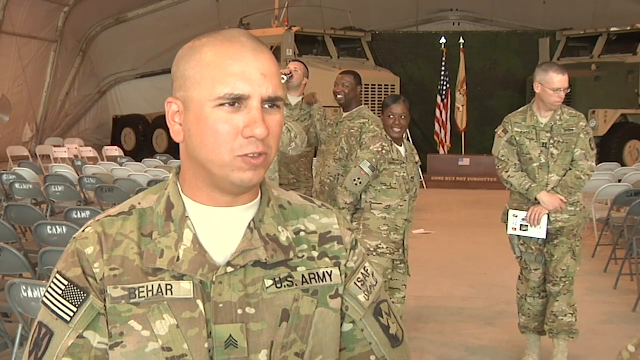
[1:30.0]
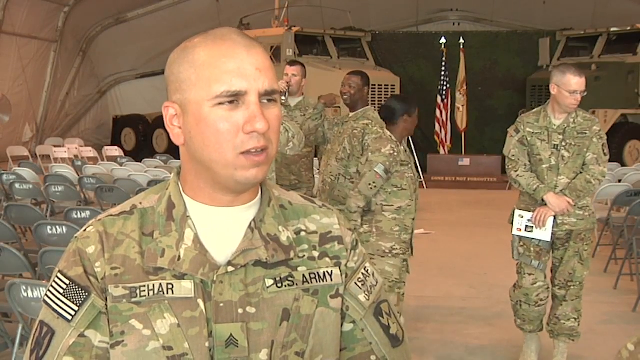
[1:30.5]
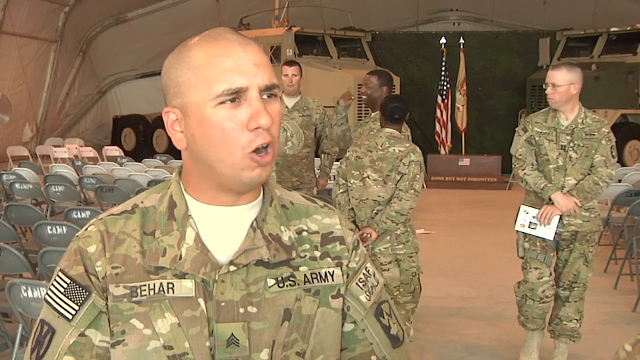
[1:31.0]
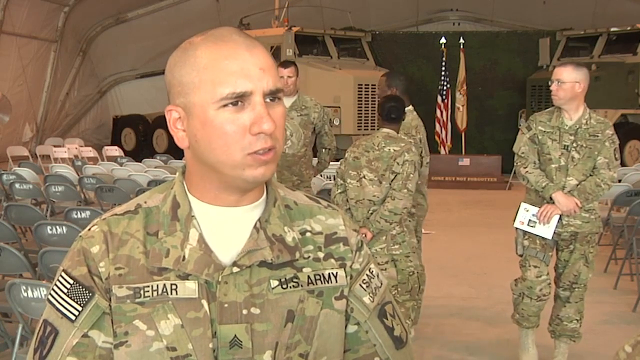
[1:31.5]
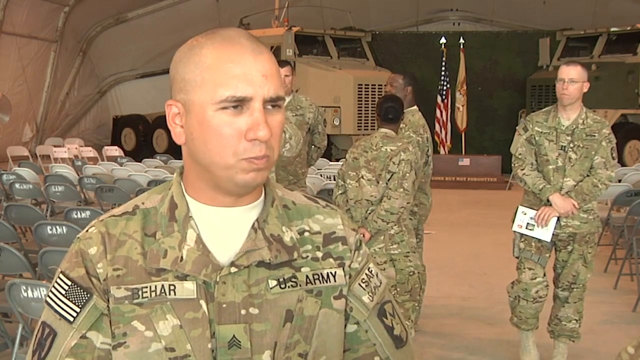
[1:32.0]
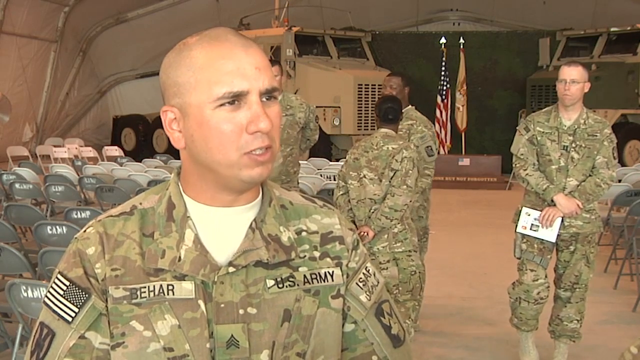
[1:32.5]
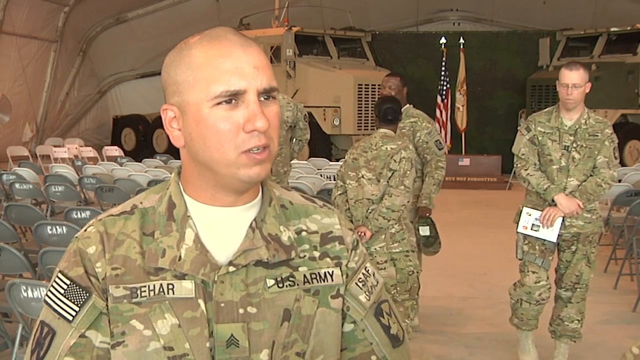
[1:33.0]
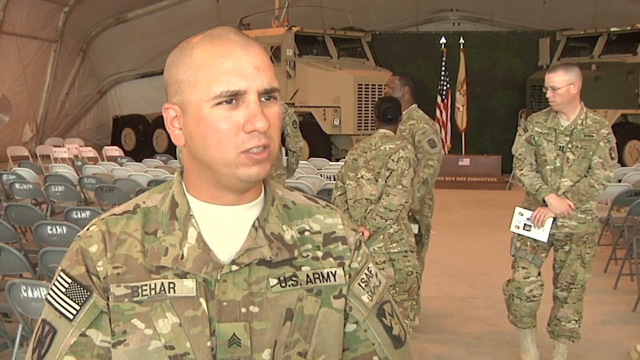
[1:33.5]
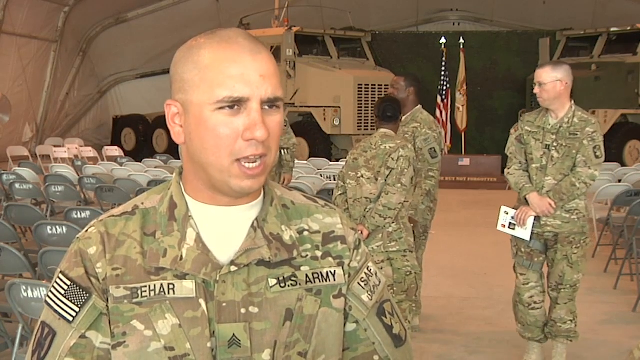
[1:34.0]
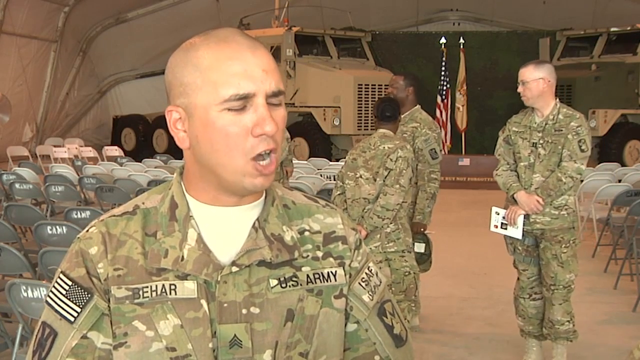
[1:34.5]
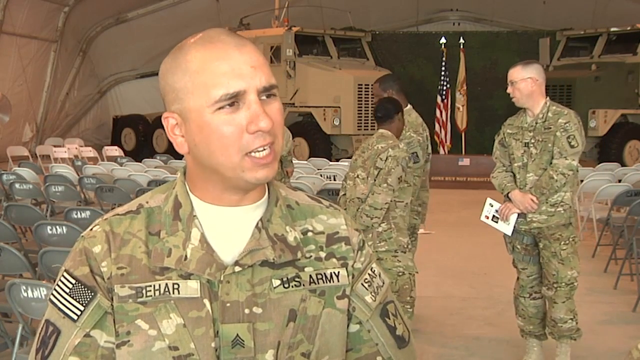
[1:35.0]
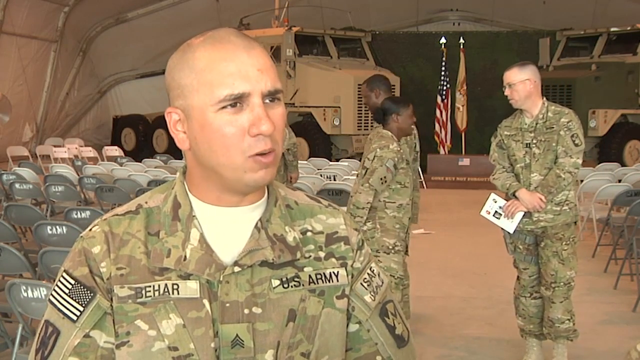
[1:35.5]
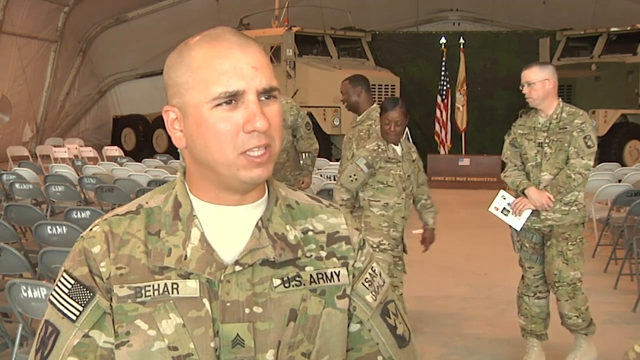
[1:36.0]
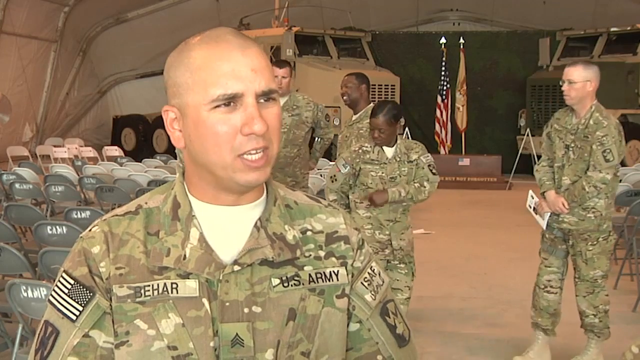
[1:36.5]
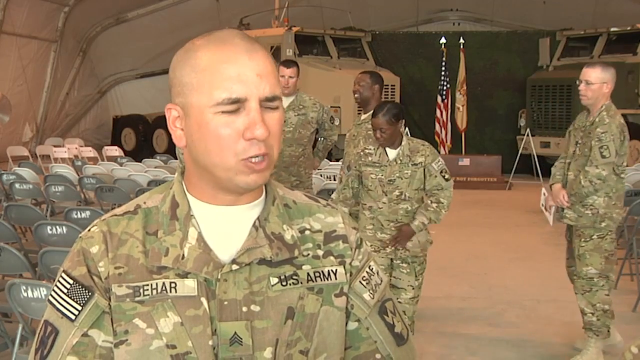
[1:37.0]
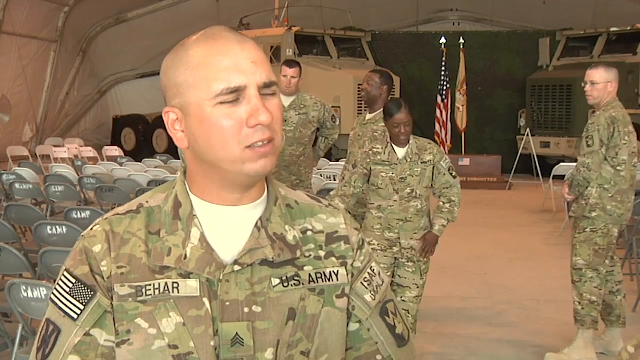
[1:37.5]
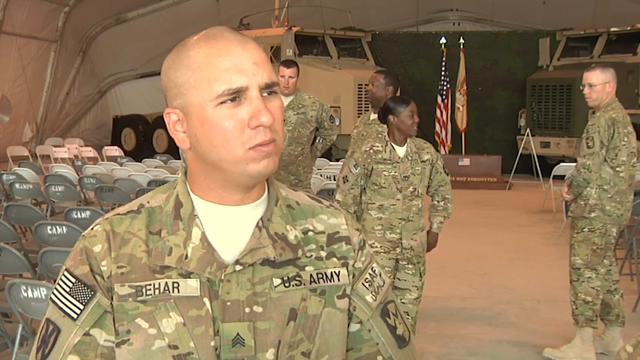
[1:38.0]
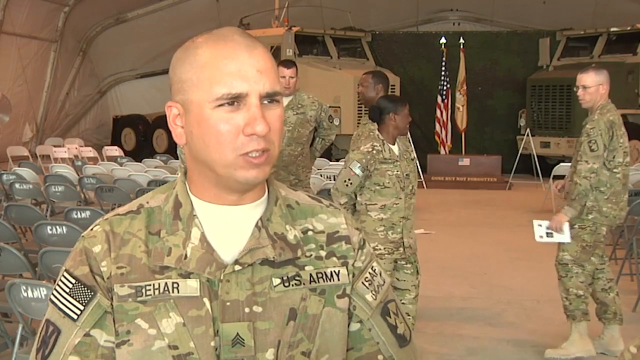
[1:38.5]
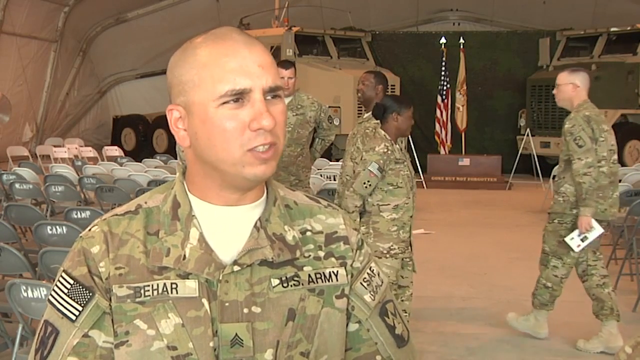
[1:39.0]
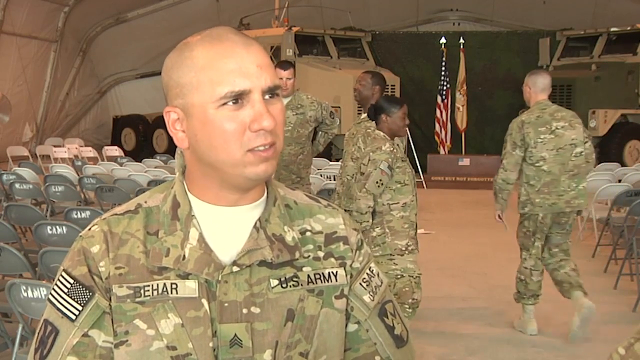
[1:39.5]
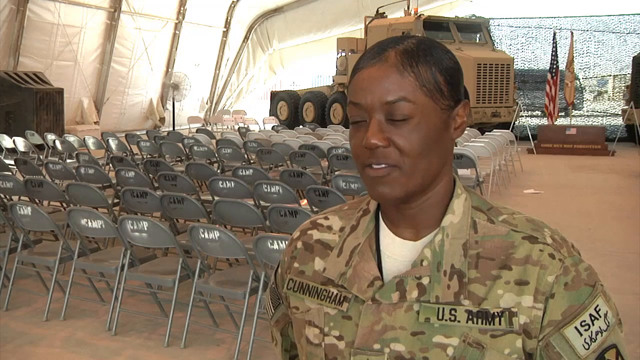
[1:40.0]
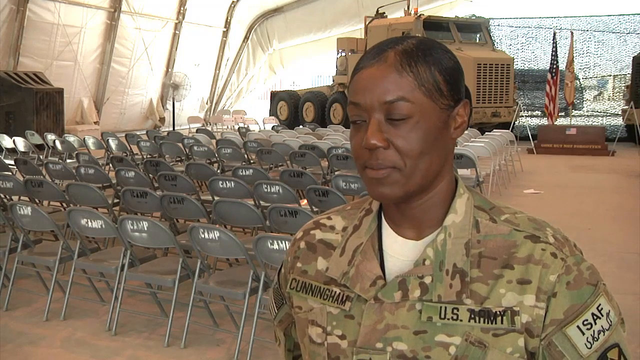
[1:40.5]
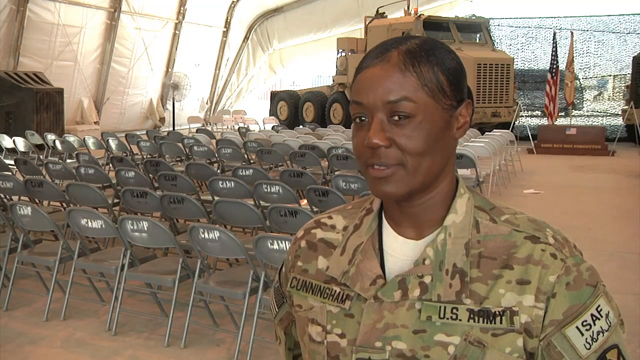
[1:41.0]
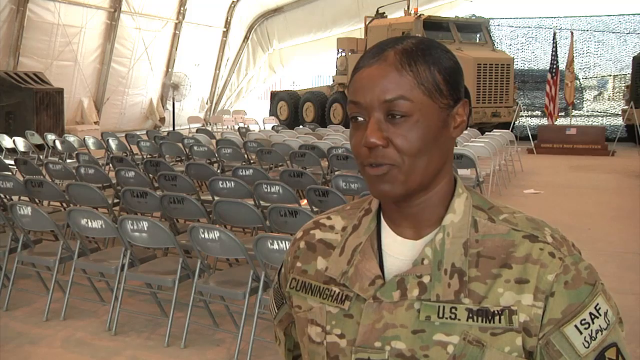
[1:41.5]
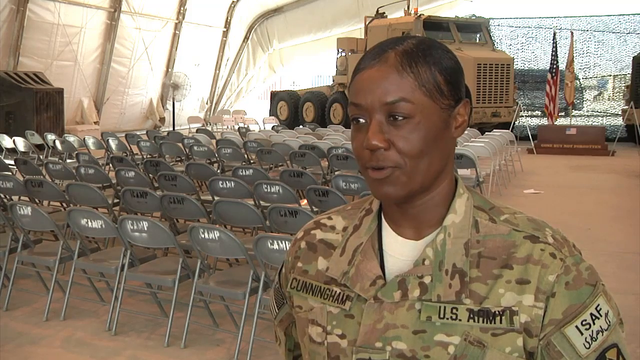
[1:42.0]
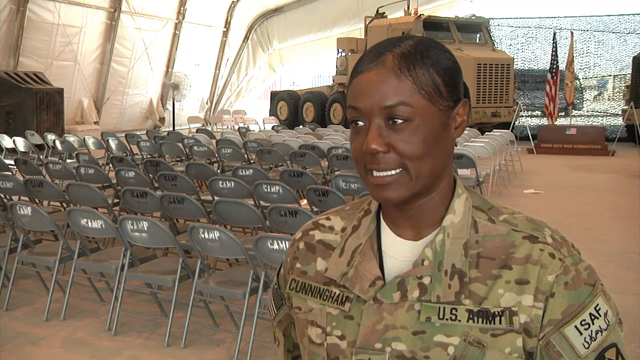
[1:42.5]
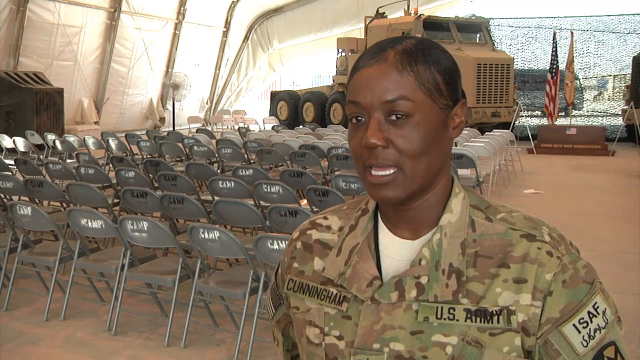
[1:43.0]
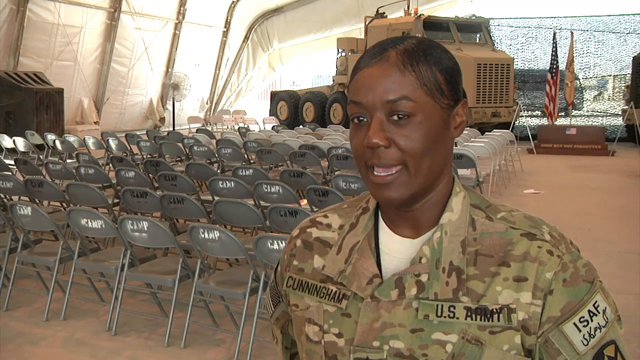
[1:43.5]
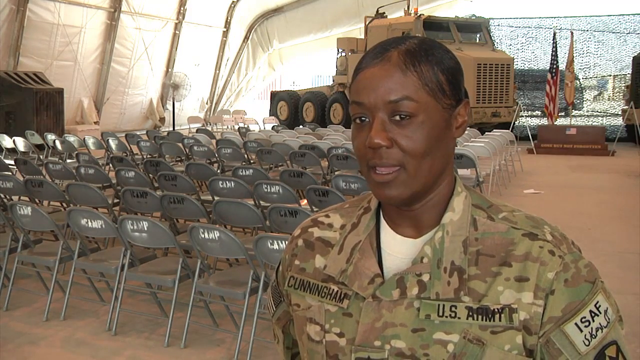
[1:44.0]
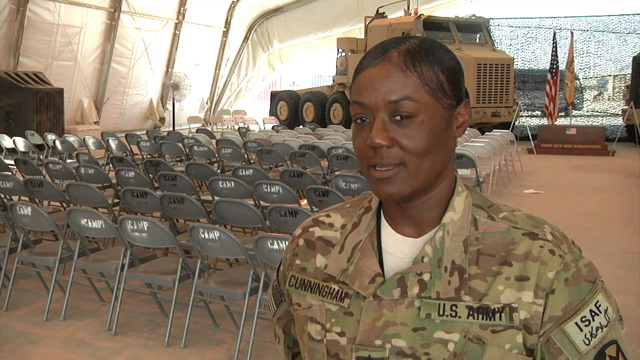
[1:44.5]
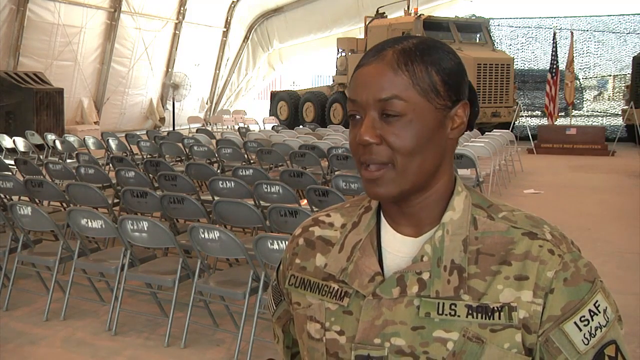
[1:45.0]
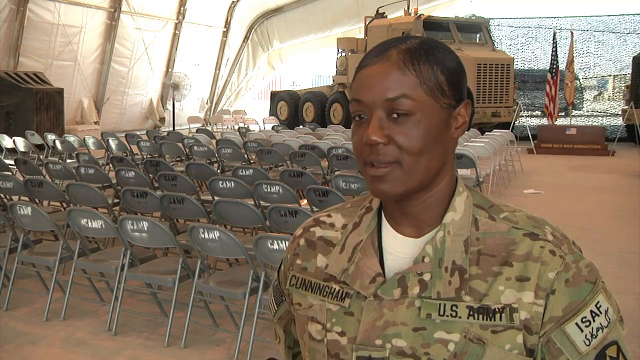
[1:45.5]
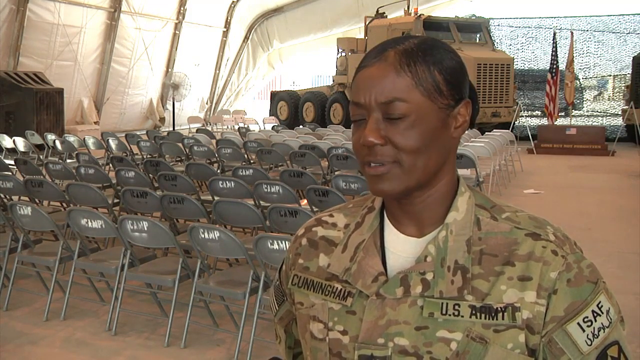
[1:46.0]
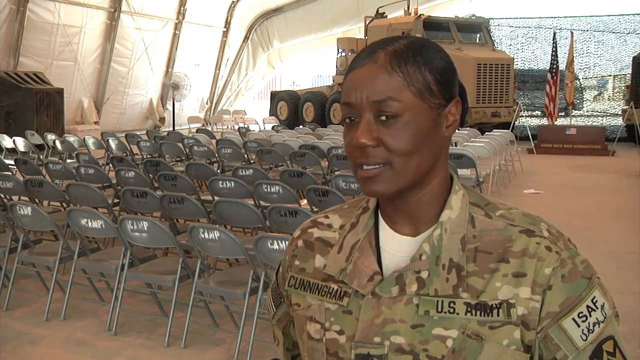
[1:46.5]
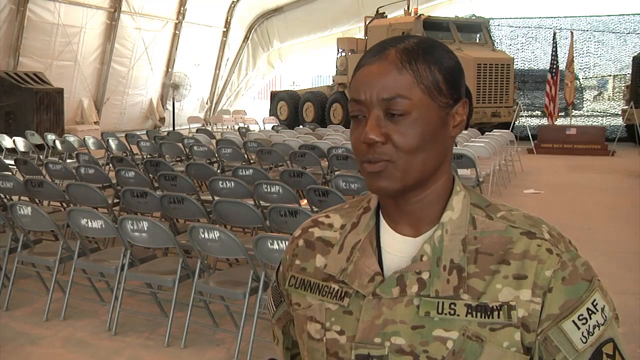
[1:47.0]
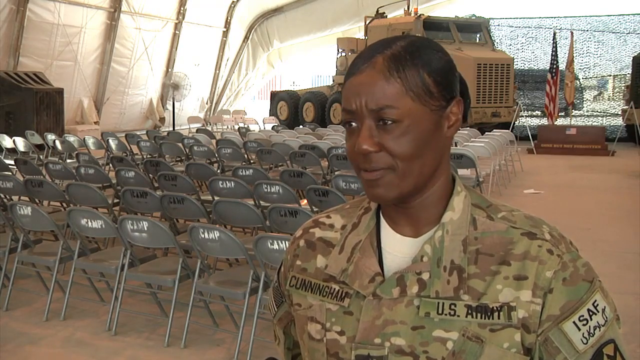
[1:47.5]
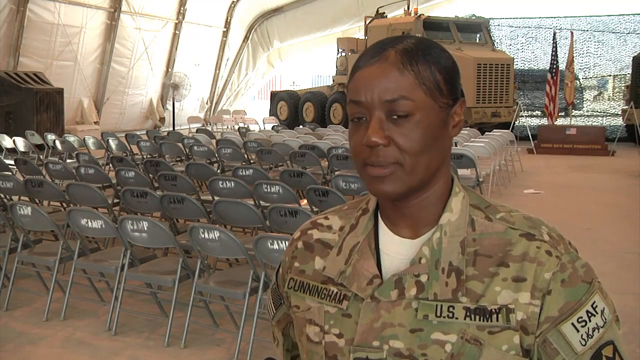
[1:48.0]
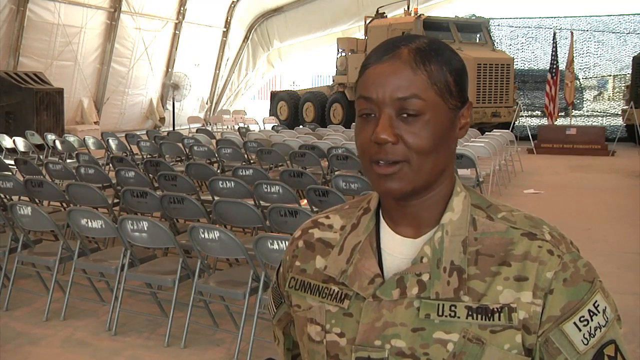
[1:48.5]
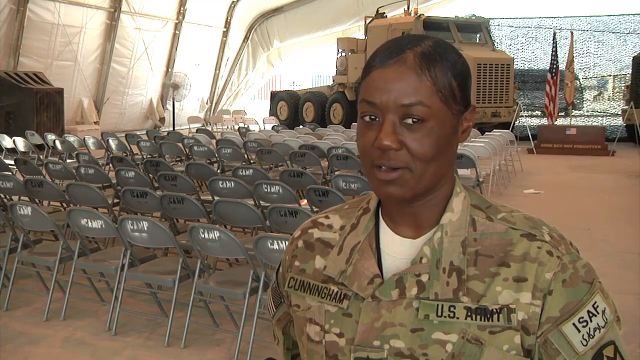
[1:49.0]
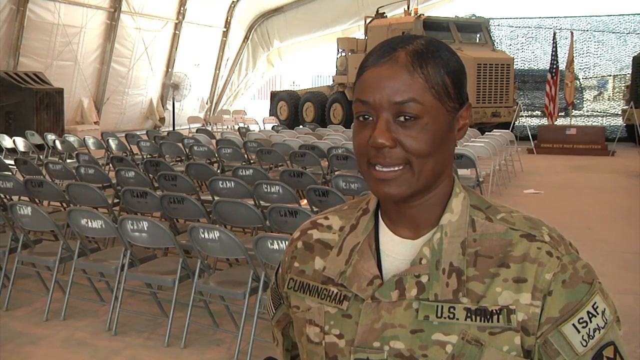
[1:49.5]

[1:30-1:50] The bald white man is close to the camera, talking, with several military people behind him. Three of them are in a kind of triangle, one facing the camera, one in profile and one with their back to the camera. To their right is a white man with his arms lowered, his right hand holding his left wrist, and seemingly some kind of paper in his left hand; he is looking at the people who are talking. As the bald man speaks to the camera, the three behind him have what looks like a lively conversation, moving their bodies a good bit. The one who had their back to the camera turns into profile and is a Black woman; she says something to the white man with the paper, then turns to fully face the camera and reaches across her body with her left arm, seemingly either pointing at something on the ground or brushing something off her uniform. She turns back to the white man and says something to him, and he turns his back to the camera and starts walking to the back of the room. The video then switches to a Black woman in camouflage talking to the camera with what appears to be a great deal of thought, her eyes moving back and forth between the camera and away as if she is thinking about what she is saying. Behind her are a couple of flags, an American flag and one other.